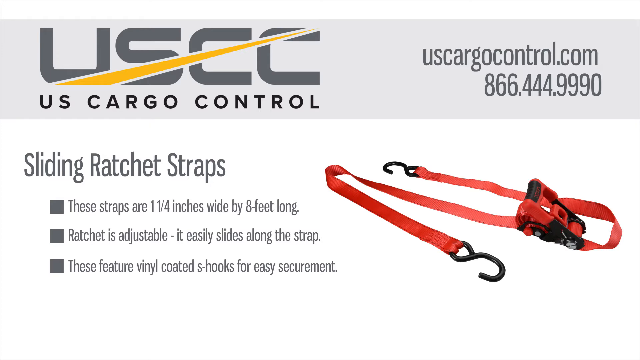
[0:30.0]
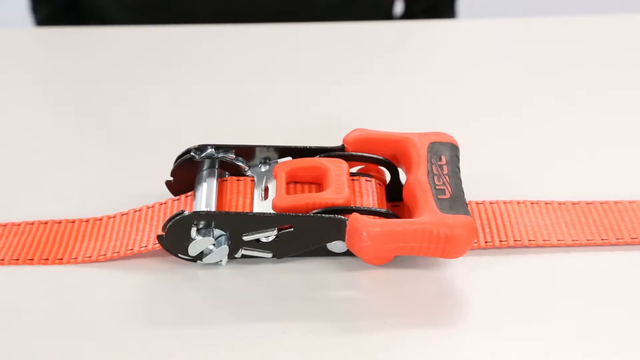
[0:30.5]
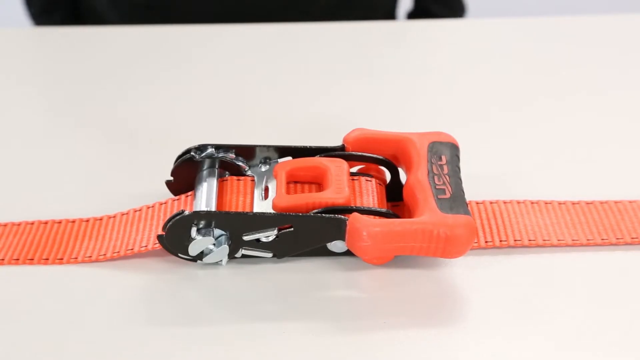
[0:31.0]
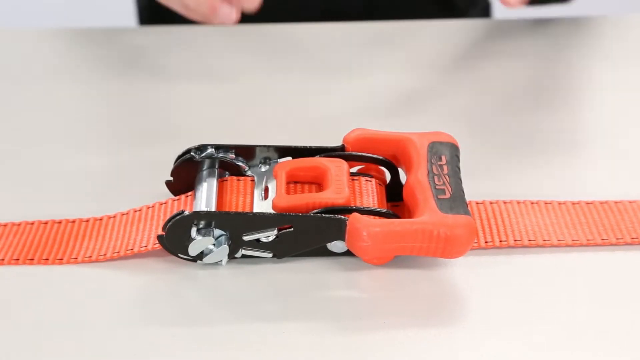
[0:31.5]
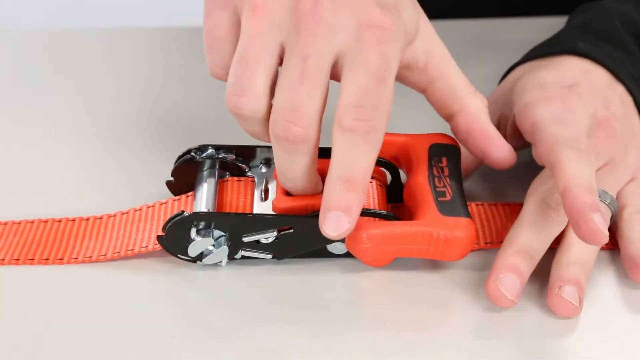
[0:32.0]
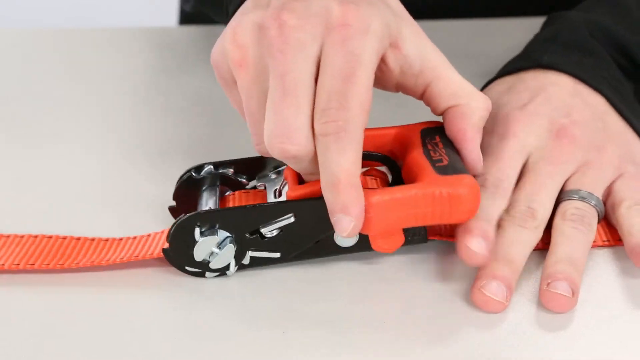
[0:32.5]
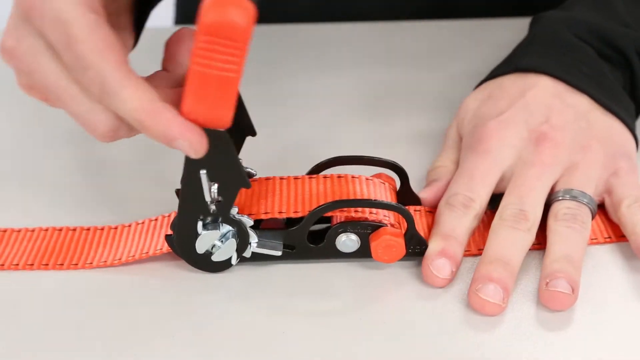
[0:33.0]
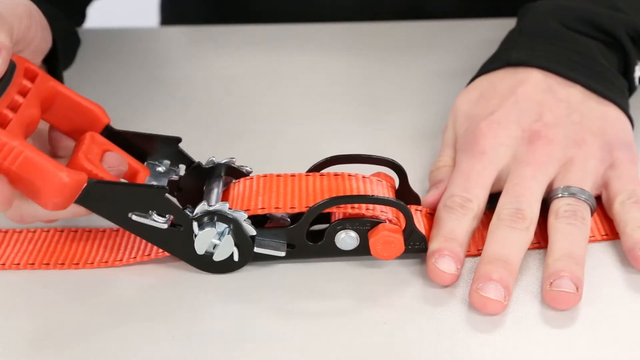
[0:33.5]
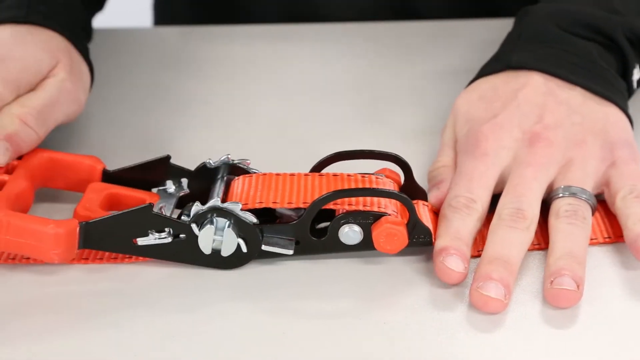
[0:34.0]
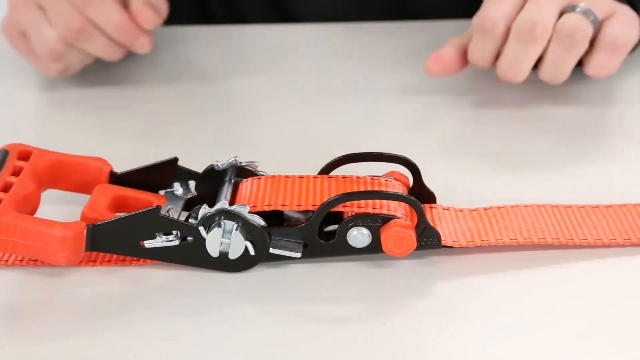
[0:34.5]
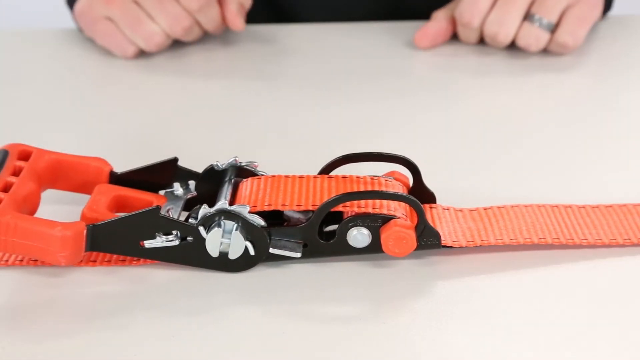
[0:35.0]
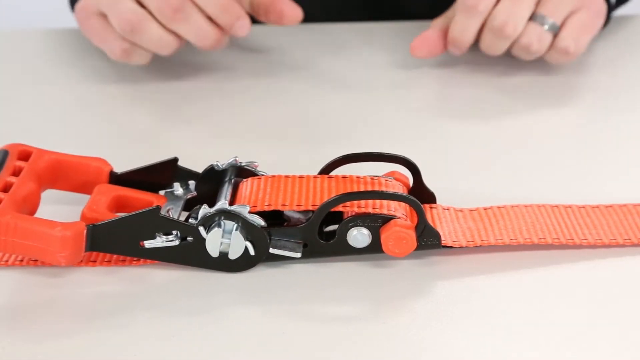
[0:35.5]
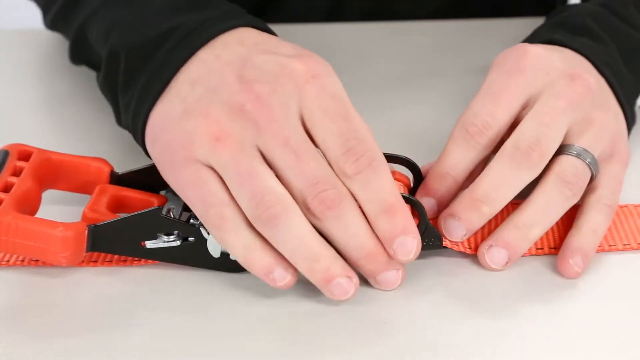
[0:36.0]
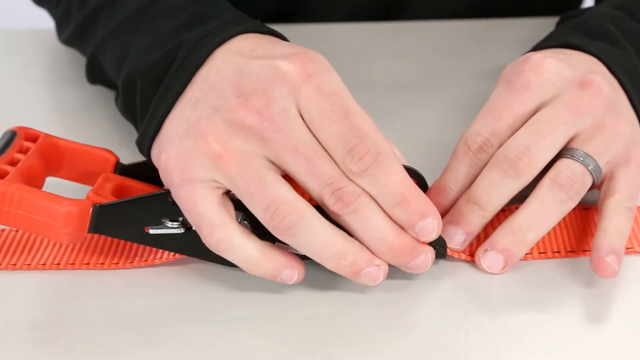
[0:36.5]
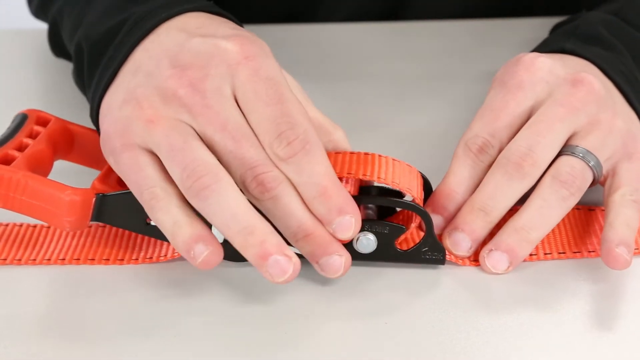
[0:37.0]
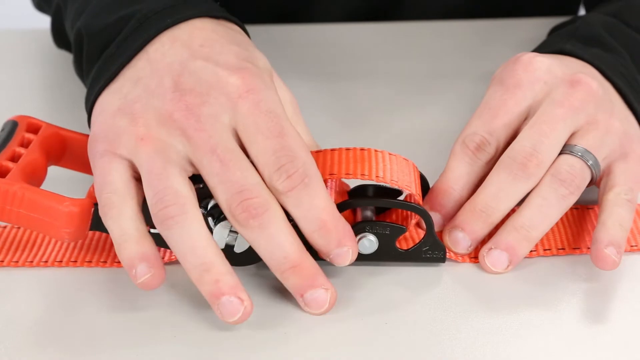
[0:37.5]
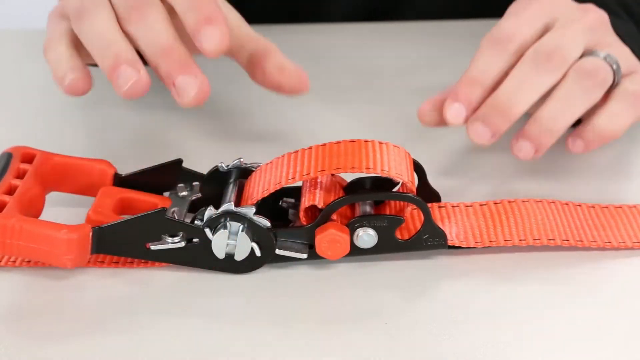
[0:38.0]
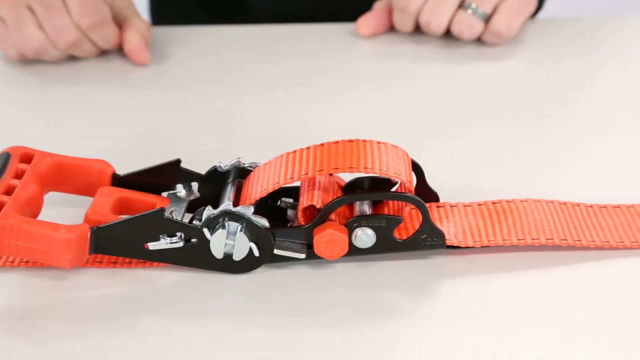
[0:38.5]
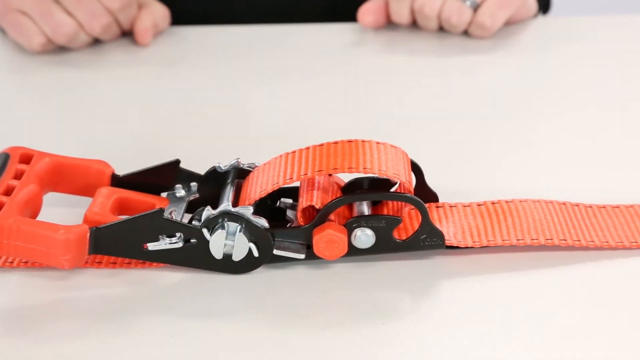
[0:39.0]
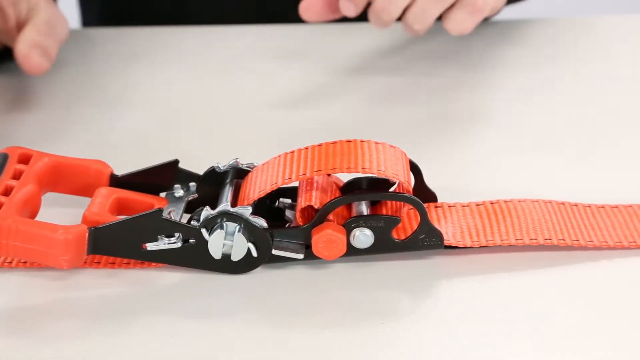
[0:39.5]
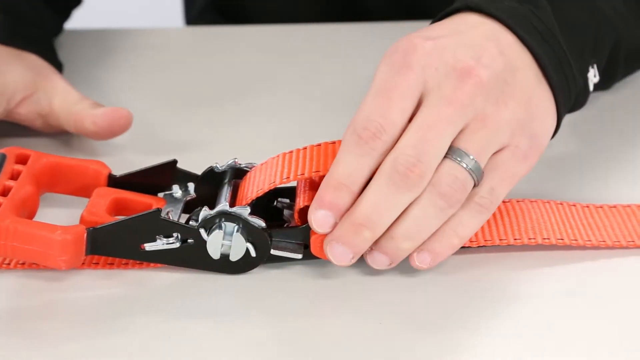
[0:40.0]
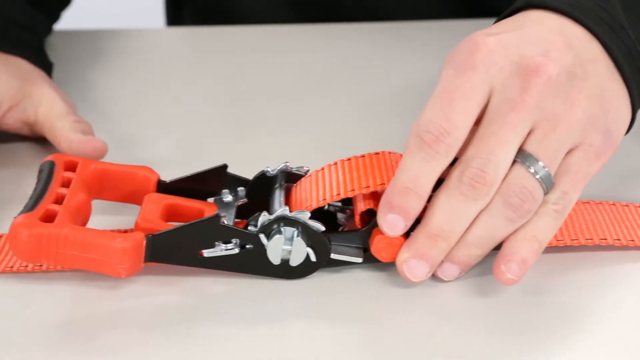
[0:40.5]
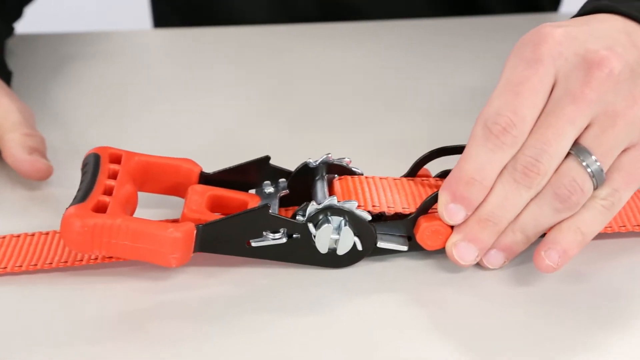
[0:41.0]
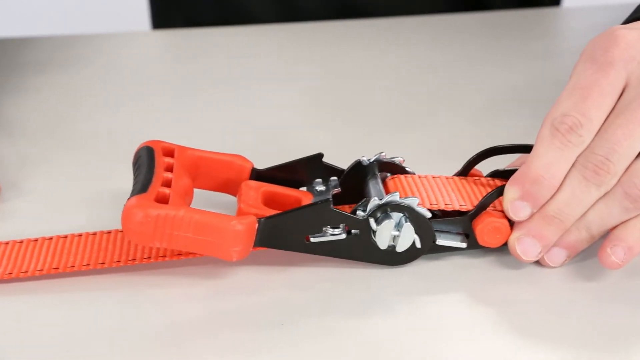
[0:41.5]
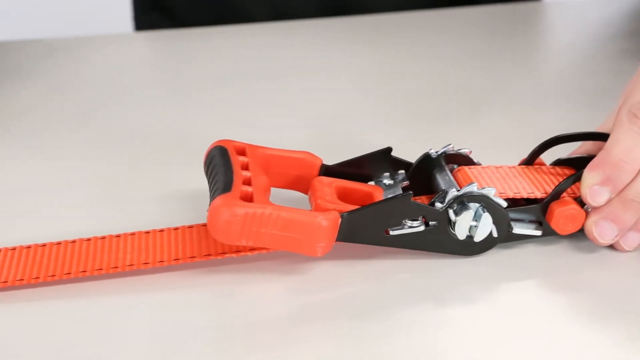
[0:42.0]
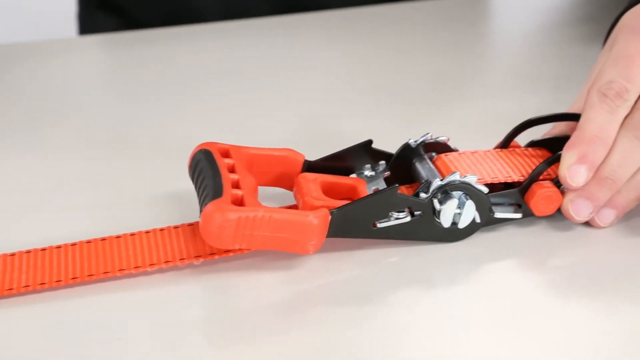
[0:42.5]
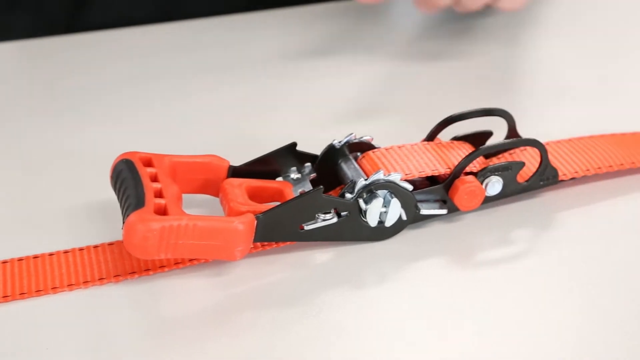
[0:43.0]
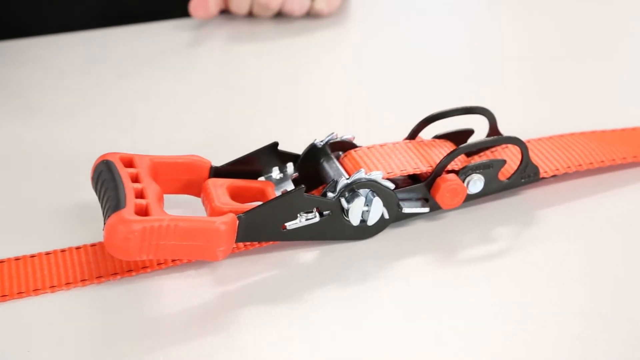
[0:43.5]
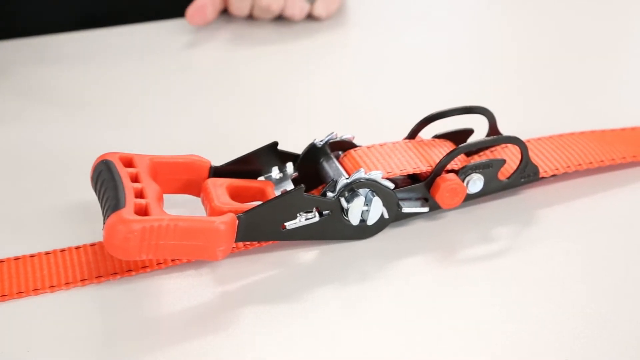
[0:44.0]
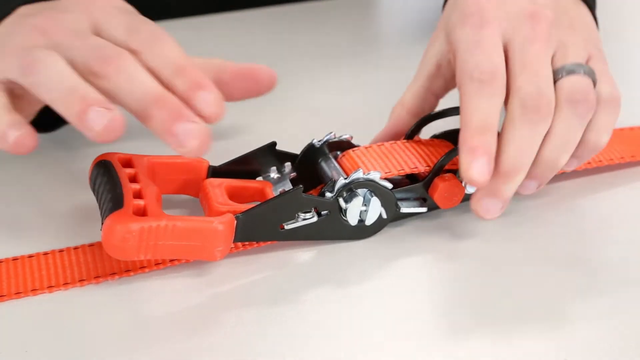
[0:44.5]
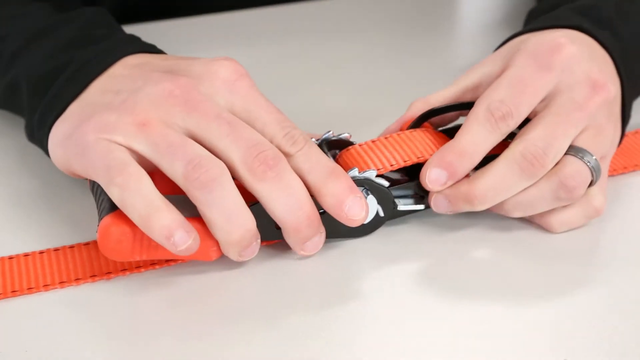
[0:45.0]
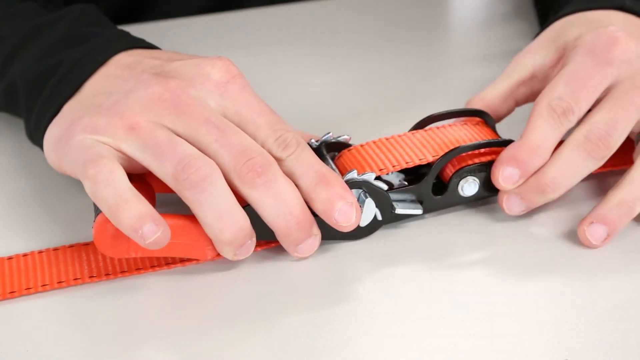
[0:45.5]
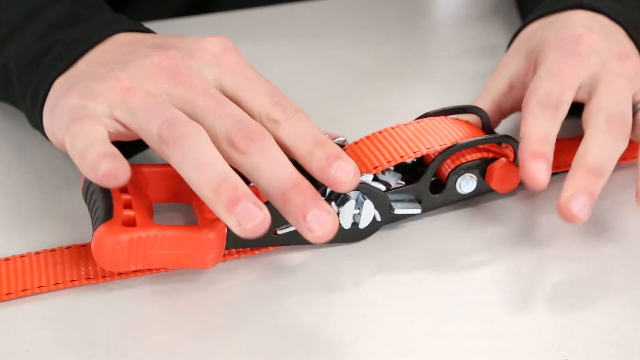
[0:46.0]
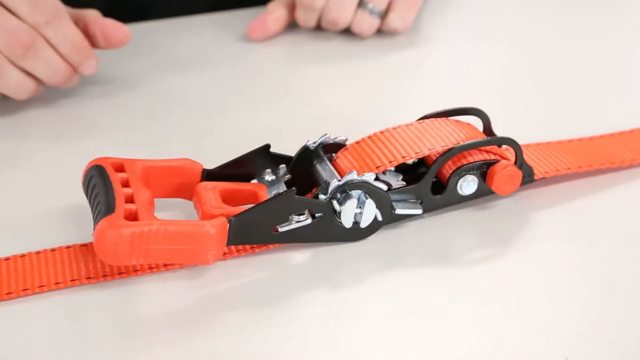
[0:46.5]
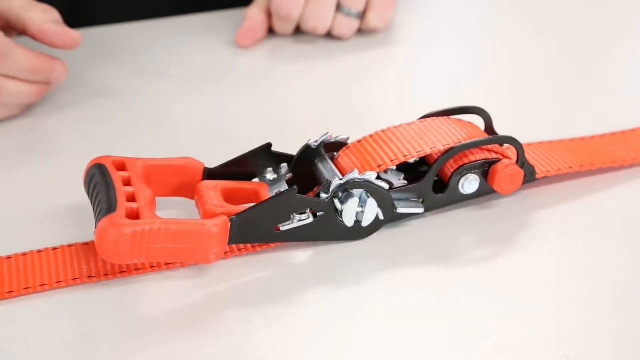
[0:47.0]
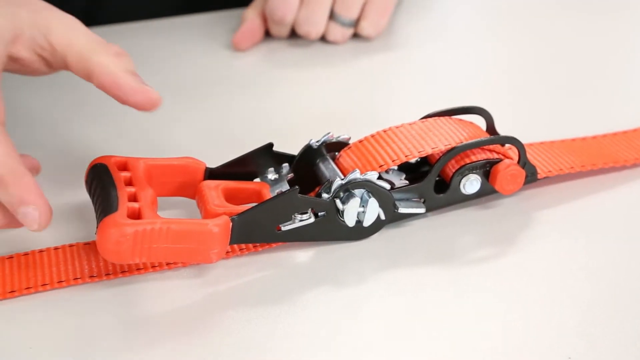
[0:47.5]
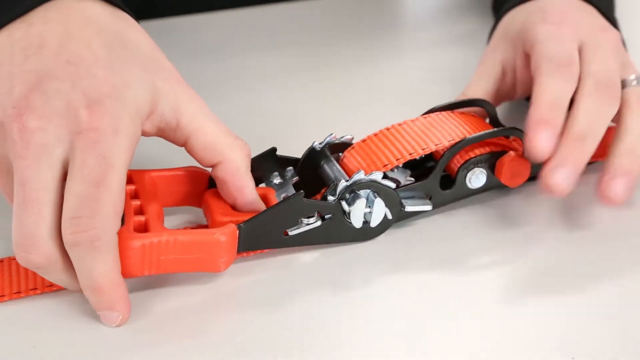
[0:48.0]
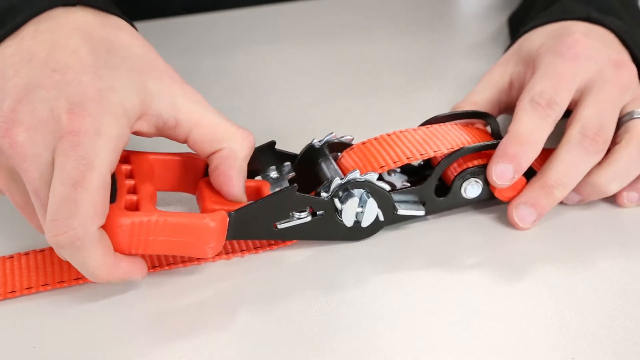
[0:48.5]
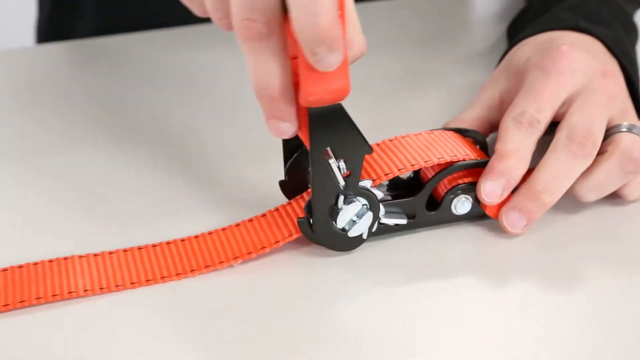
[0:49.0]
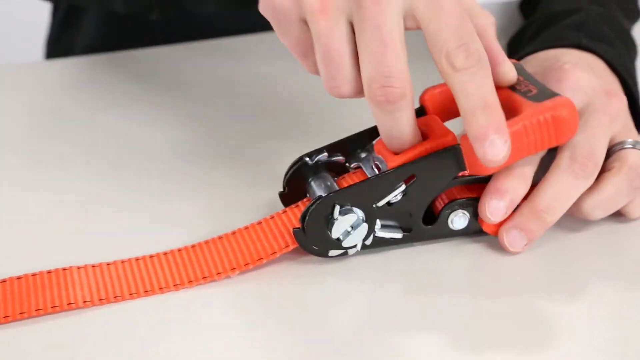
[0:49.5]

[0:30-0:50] A close-up shows a black object that looks like a buckle, with an orange handle on its left side that opens. It looks roughly square, with a smaller square underneath that has a hole in it. The man opens it, somewhat like a book, then moves the buckle to the right while pulling the strap through the mechanism, somewhat like a belt, making it smaller and adjusting the size. He puts his middle finger through the hole on the left side of the buckle as he closes it, so it closes from left to right. The desk is completely white, so the product is clearly visible with no obstructions.